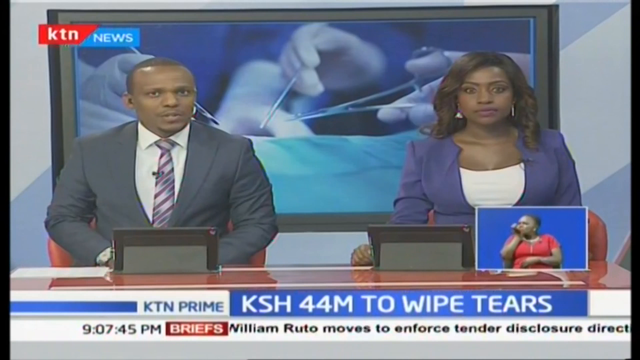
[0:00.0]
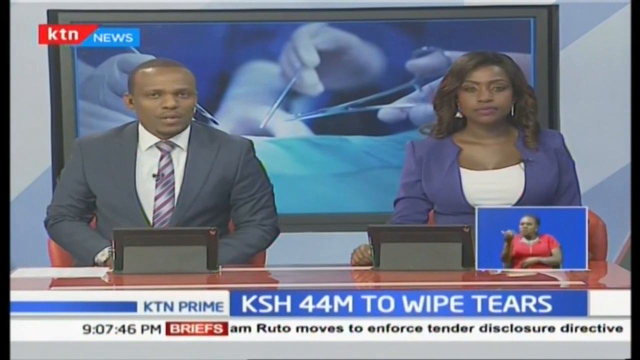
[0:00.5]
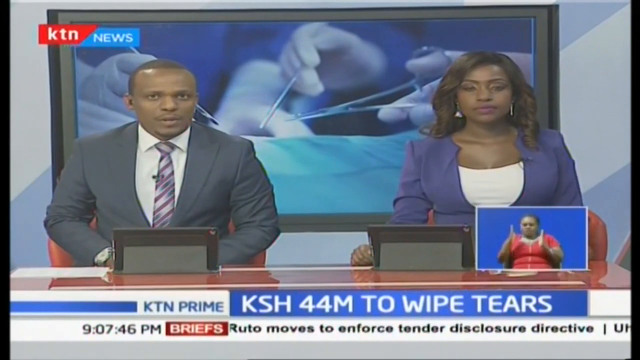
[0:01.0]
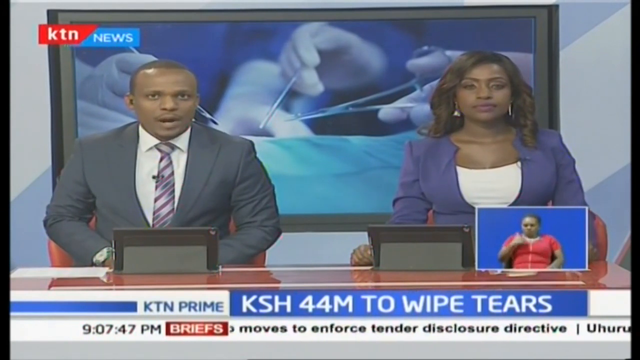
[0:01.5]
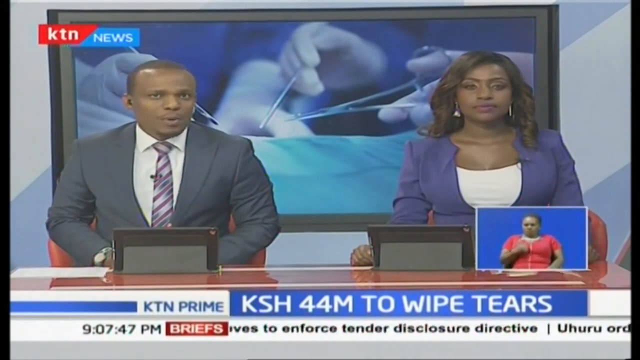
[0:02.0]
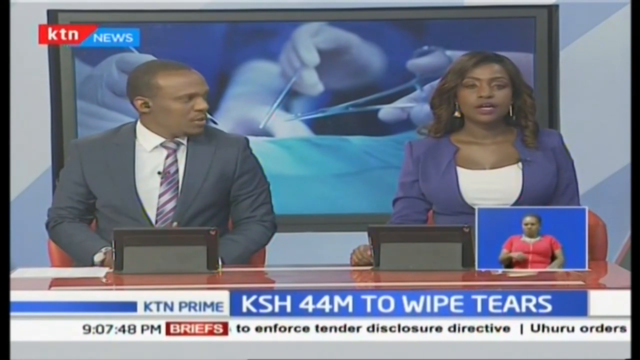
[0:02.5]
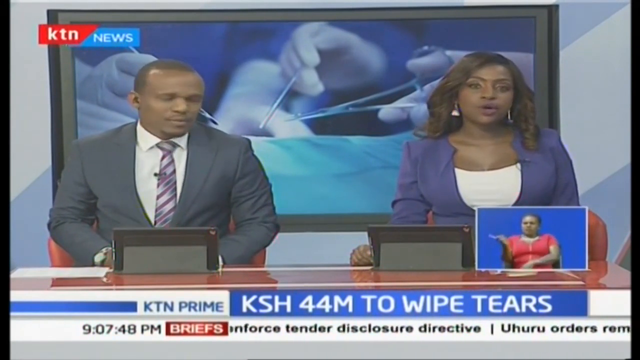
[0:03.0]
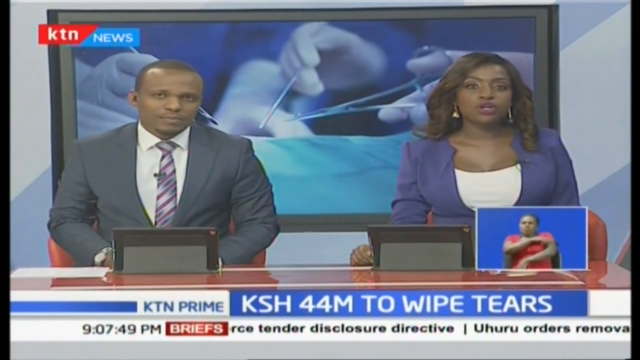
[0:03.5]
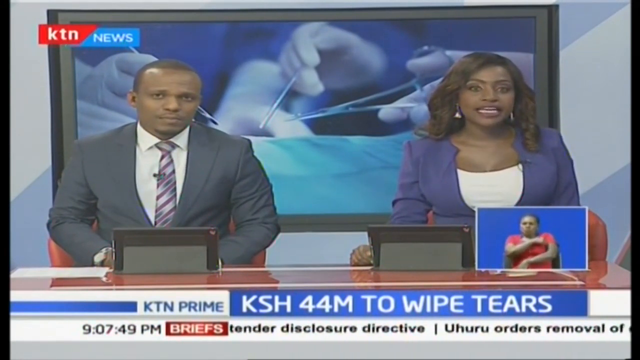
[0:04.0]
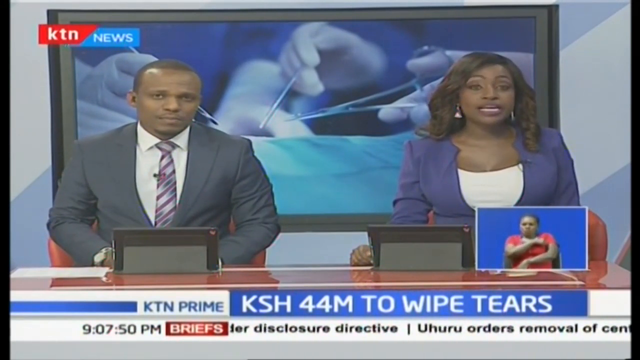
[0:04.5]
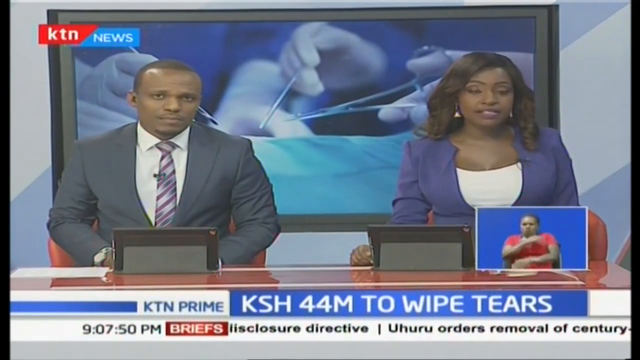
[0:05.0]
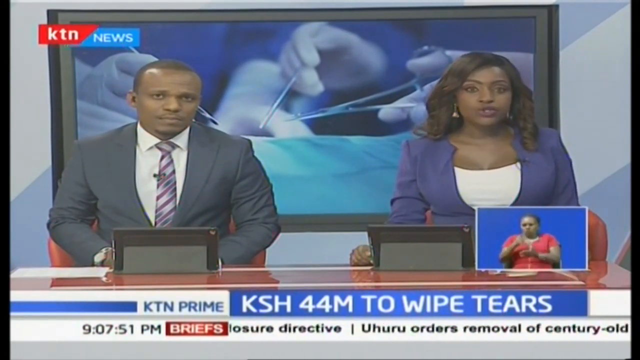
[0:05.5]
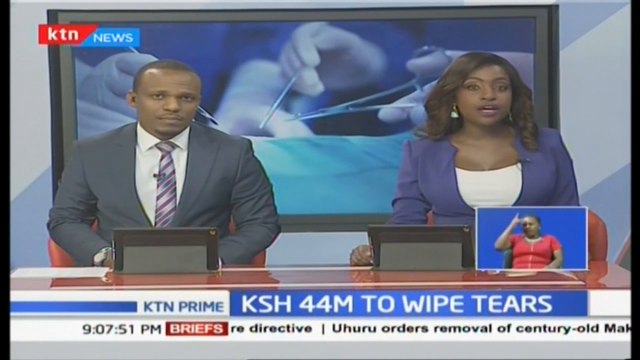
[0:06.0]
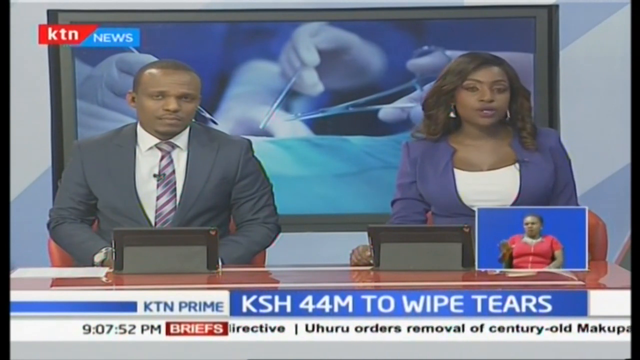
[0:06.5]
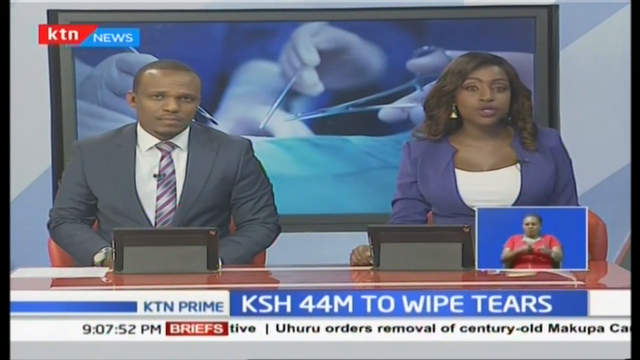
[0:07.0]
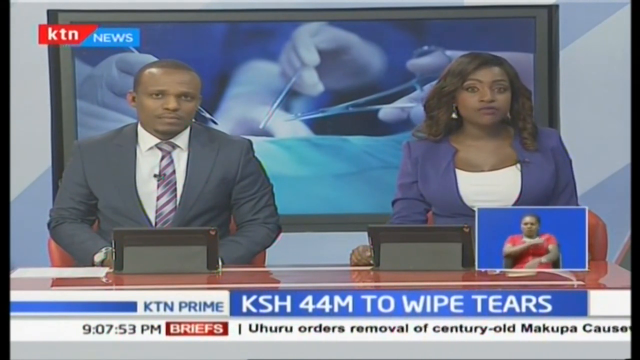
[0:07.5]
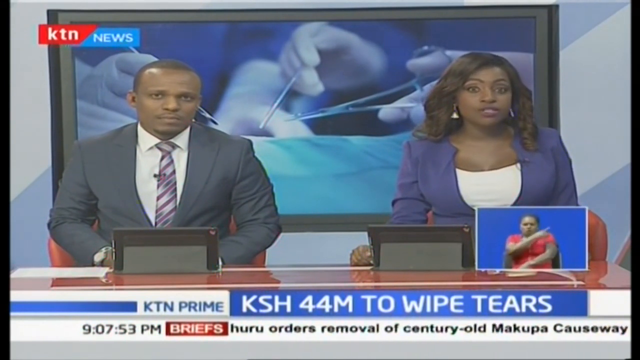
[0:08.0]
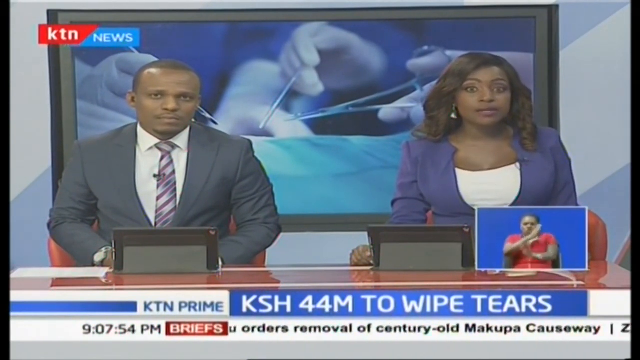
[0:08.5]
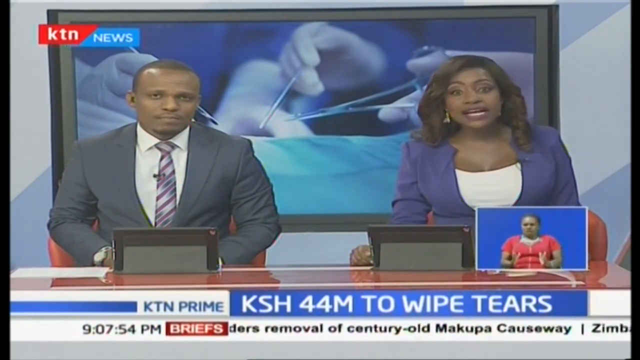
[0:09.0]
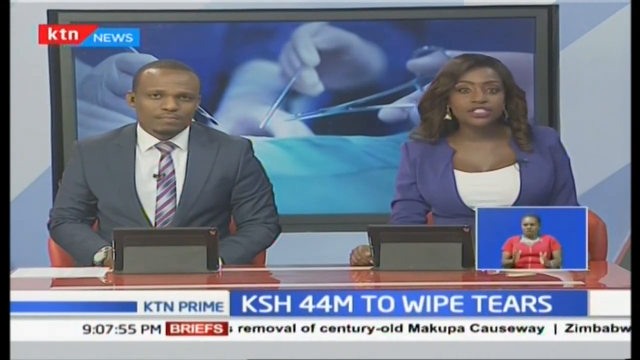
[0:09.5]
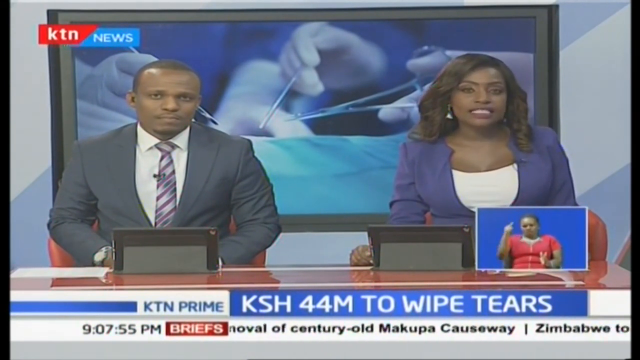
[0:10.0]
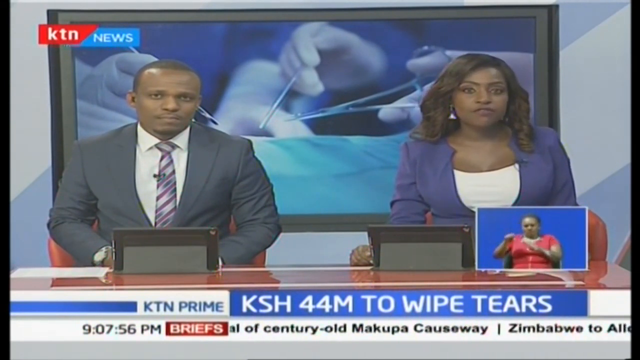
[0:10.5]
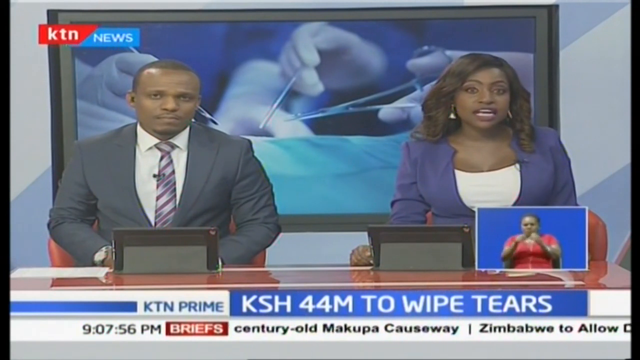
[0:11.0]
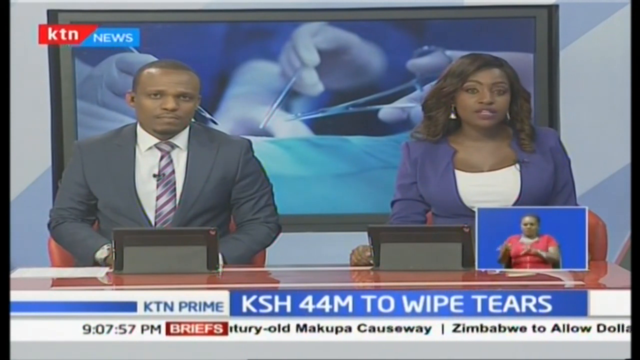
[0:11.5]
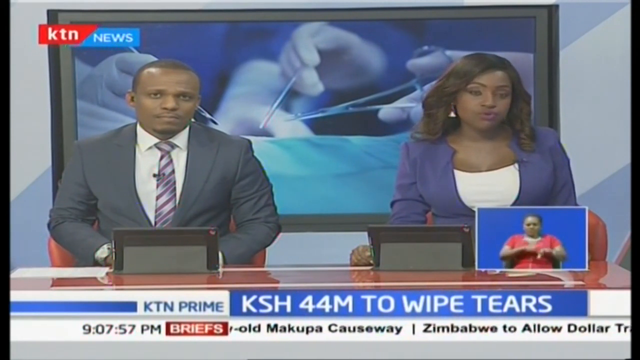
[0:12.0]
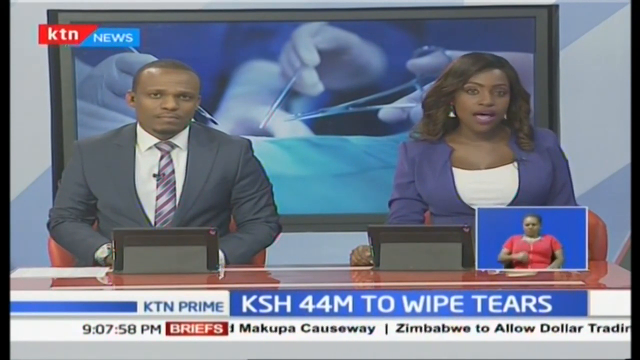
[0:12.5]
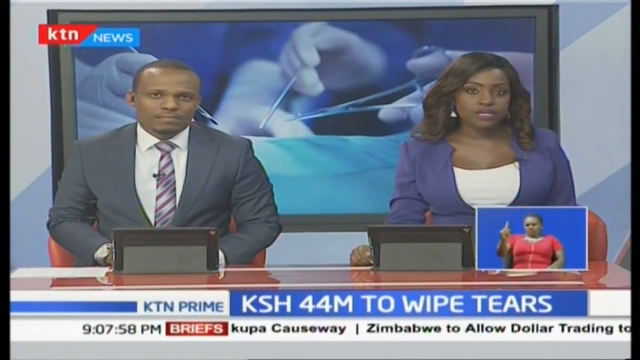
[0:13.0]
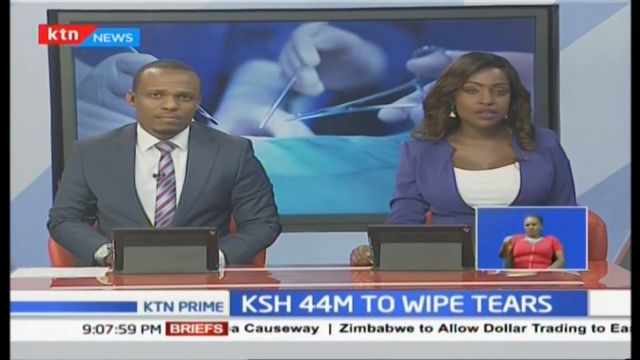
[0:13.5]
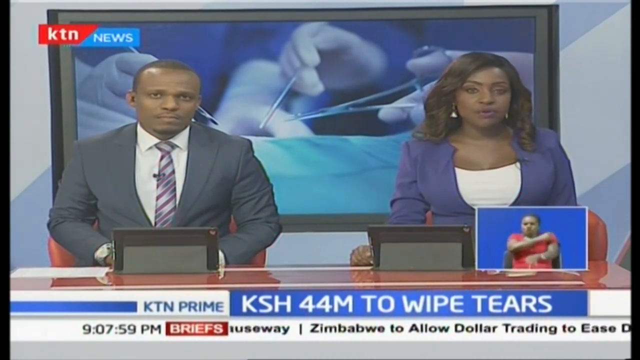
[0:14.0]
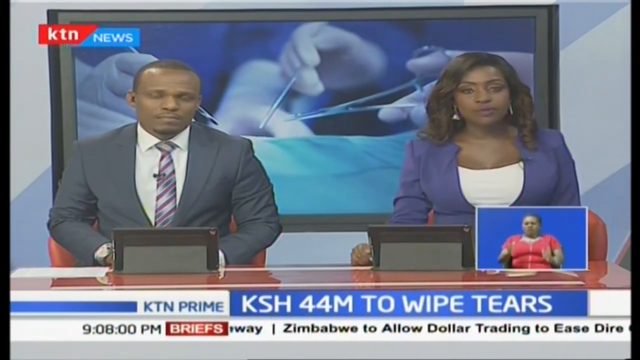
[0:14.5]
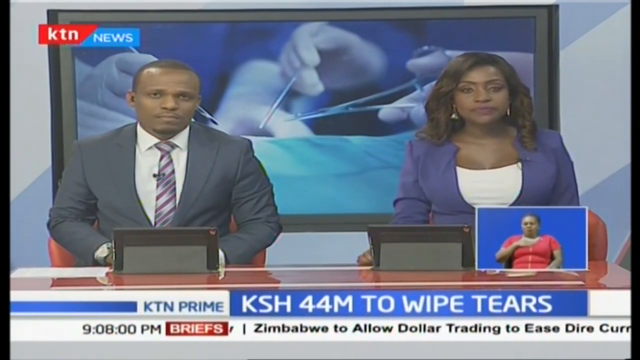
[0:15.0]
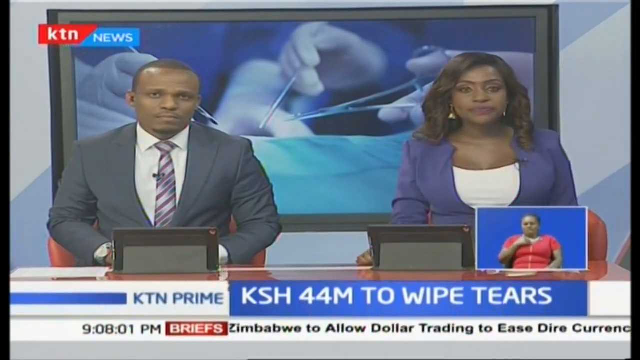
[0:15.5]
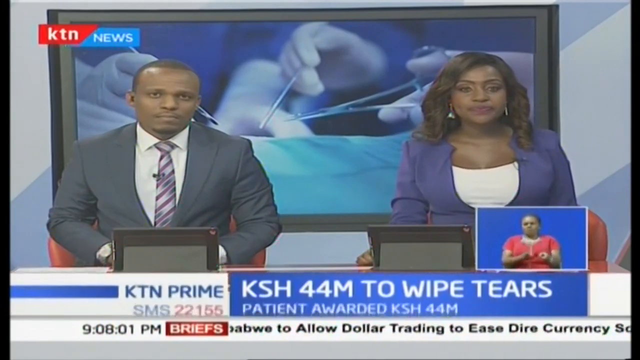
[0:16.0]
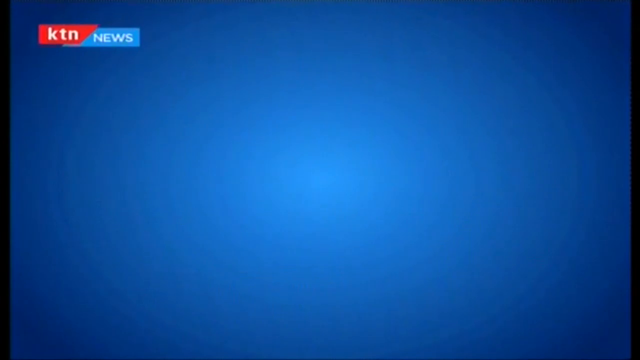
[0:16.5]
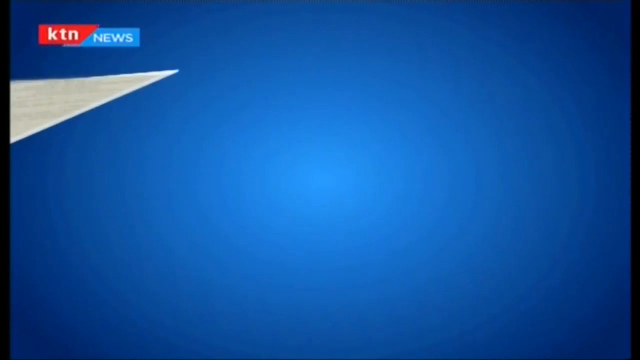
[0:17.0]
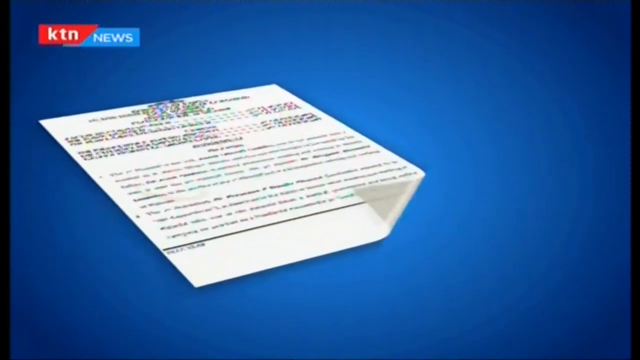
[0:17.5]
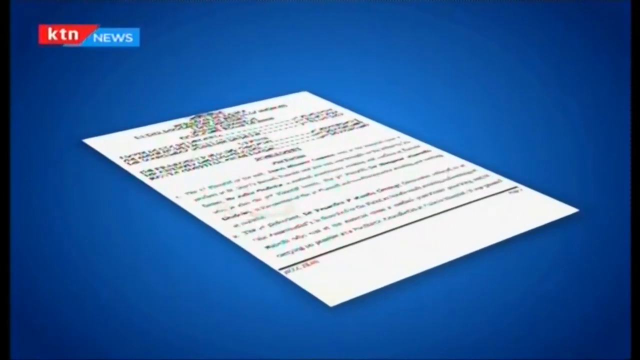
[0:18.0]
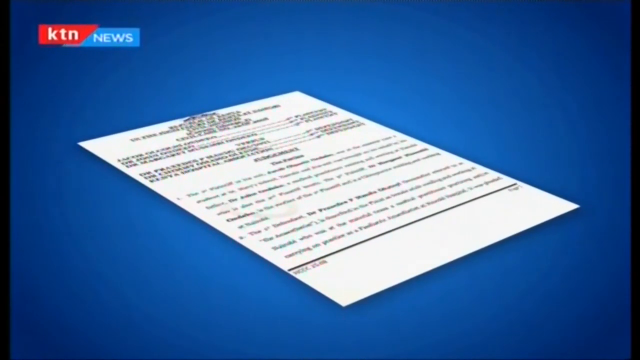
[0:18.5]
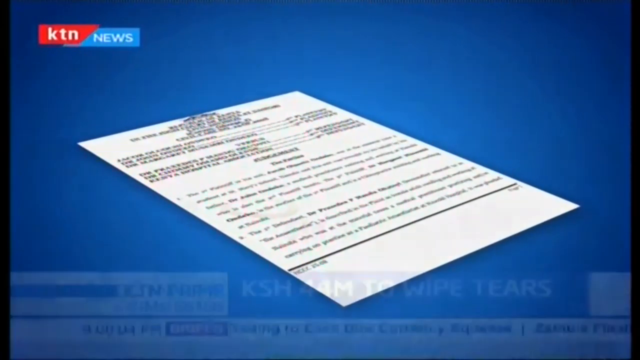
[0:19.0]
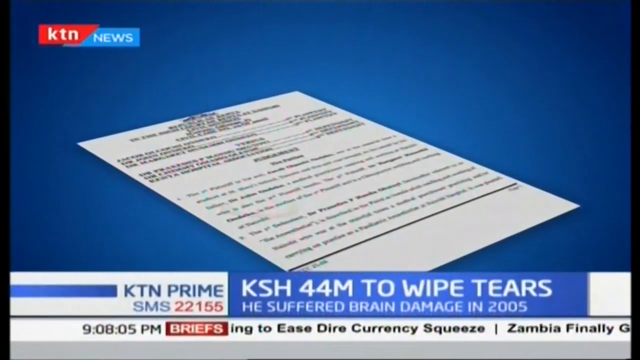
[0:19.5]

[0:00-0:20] Two African-American newscasters, a man on the left and a woman on the right, both appearing to be in their 30s or maybe their 40s, present a story in a newsroom. Little changes over the course of the shot; they talk and move. A large TV in the back is playing footage of what looks like cloth, with fabric being cut. Text at the bottom reads "KSH44M to wipe tears", and the news network is KTN Prime. A ticker along the bottom moves to the left with various news stories, and the time is 9:07 p.m.